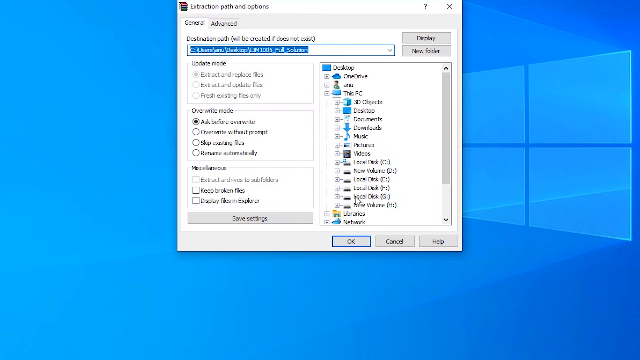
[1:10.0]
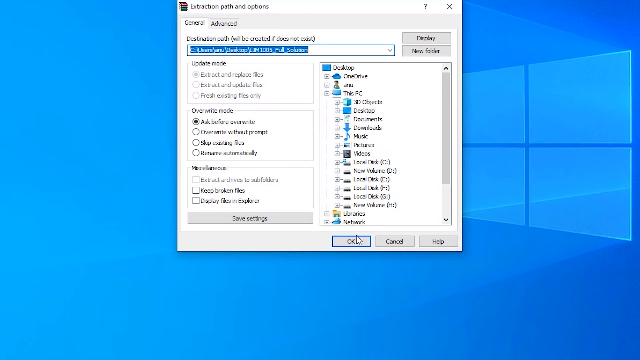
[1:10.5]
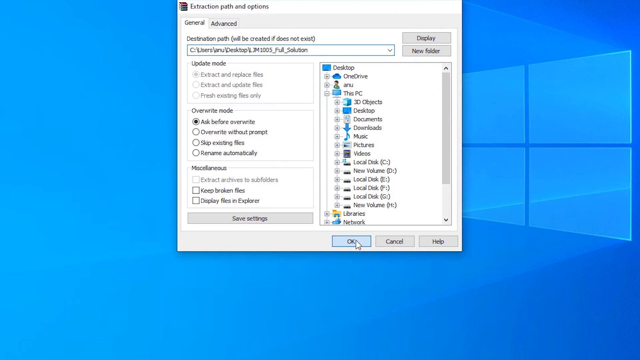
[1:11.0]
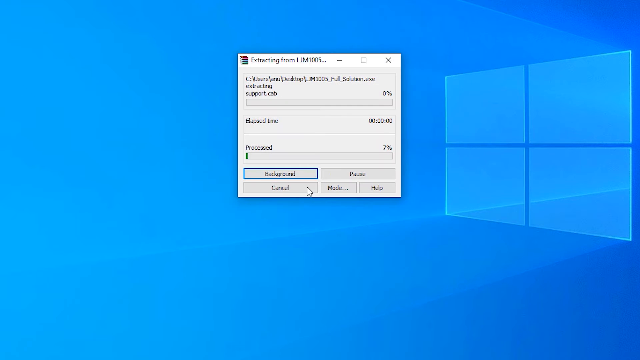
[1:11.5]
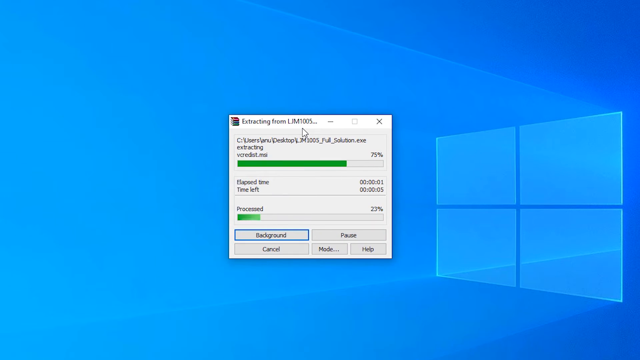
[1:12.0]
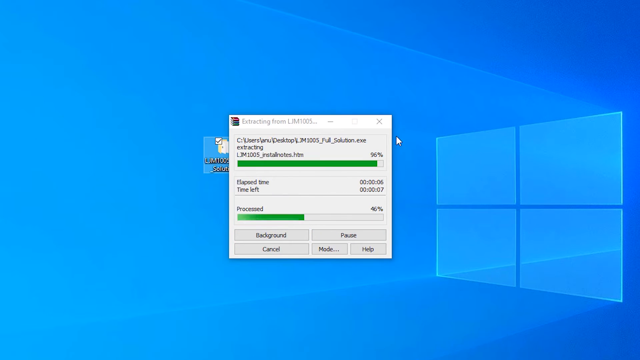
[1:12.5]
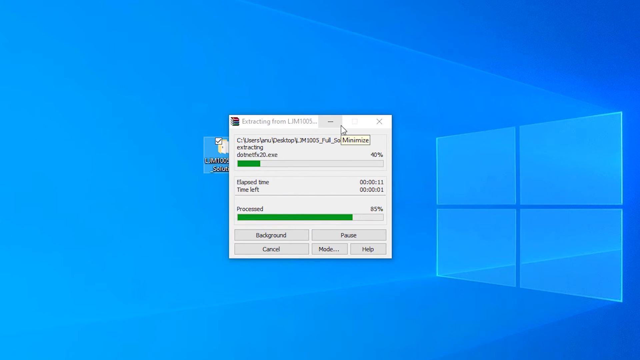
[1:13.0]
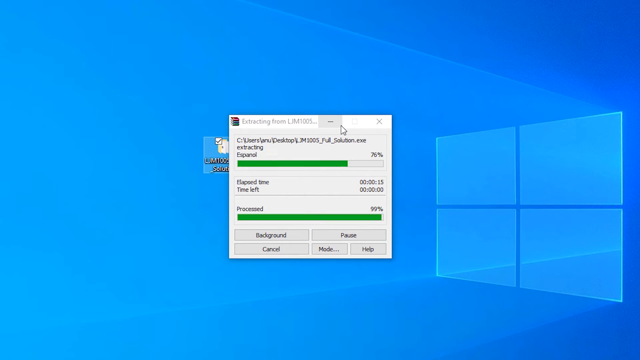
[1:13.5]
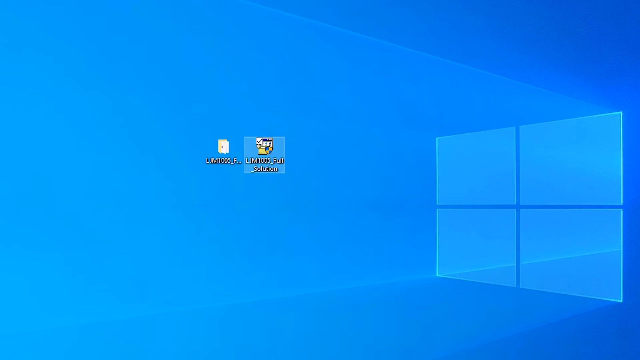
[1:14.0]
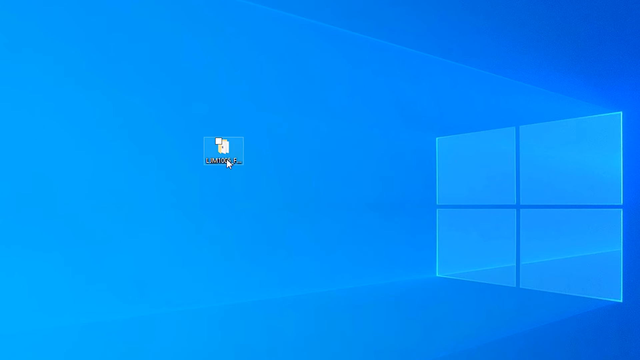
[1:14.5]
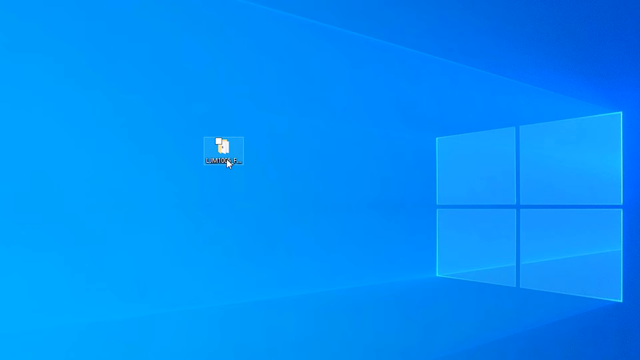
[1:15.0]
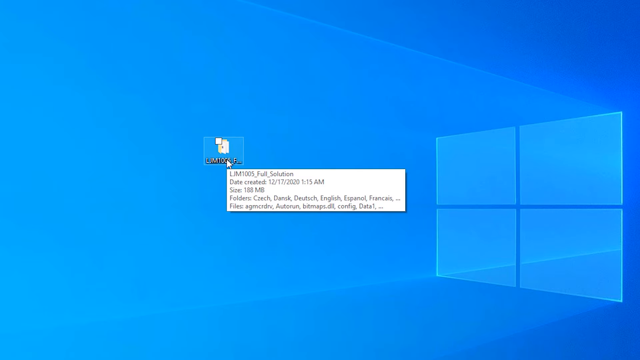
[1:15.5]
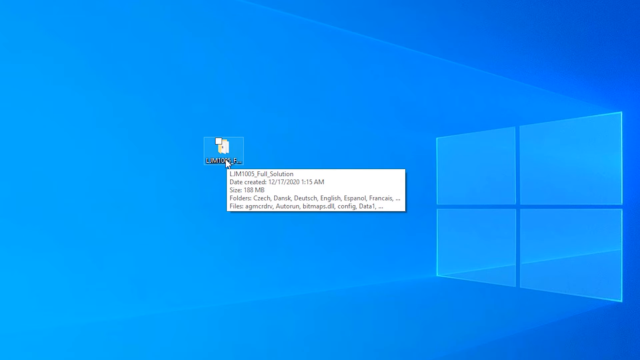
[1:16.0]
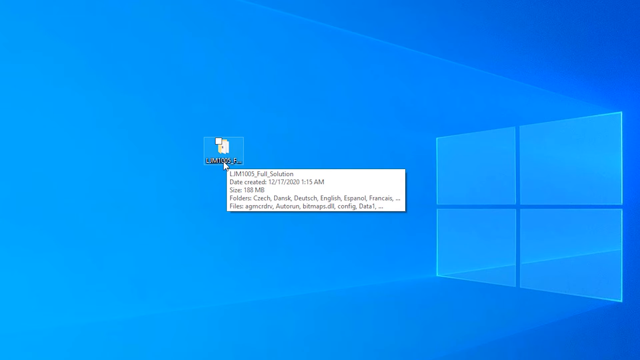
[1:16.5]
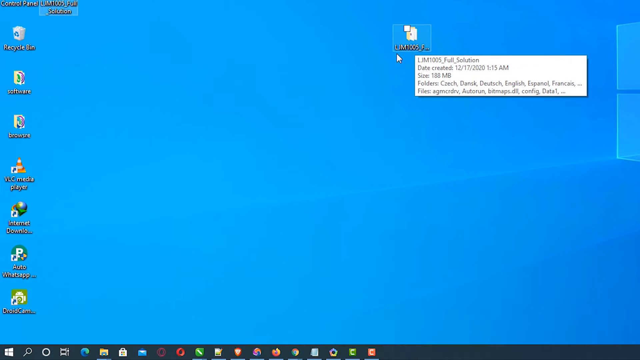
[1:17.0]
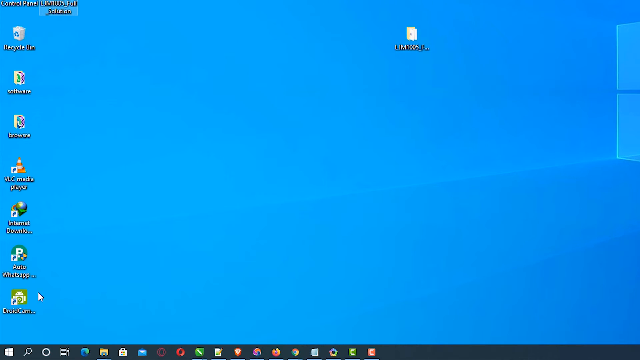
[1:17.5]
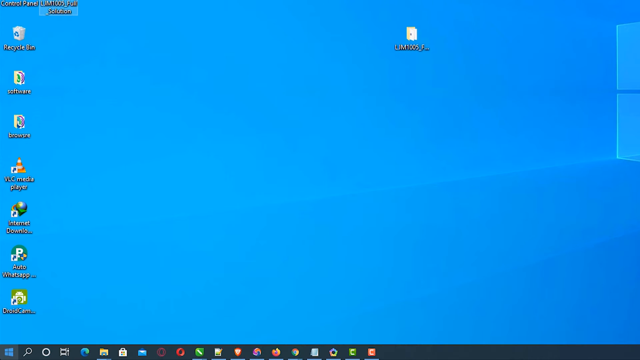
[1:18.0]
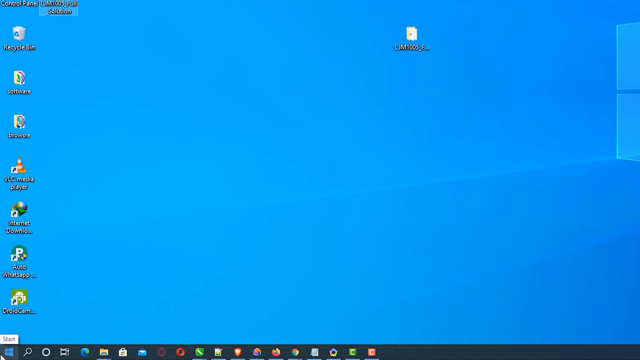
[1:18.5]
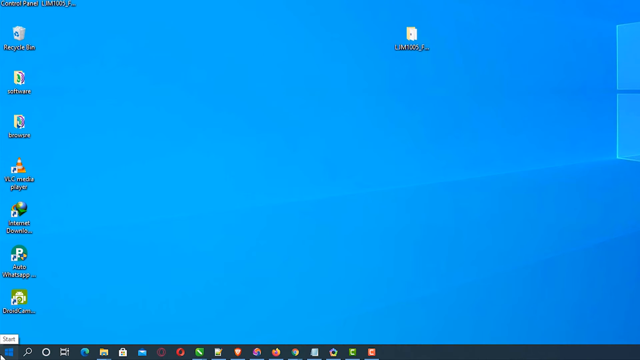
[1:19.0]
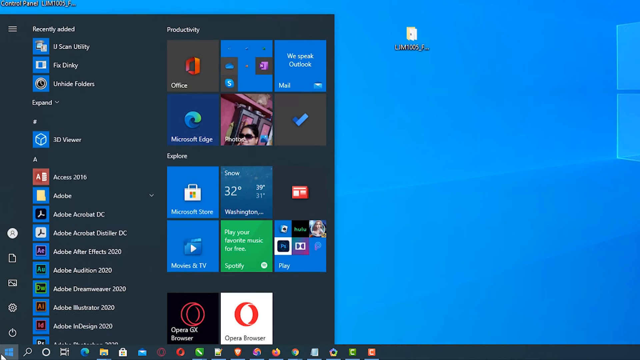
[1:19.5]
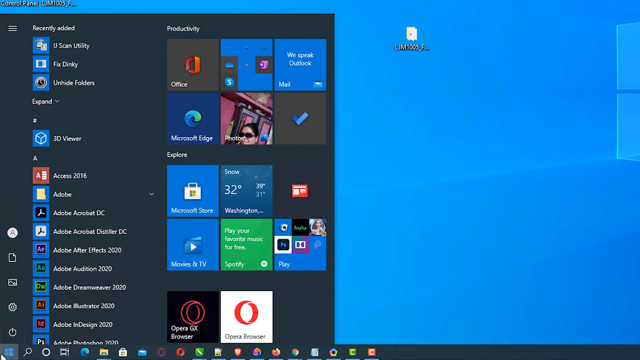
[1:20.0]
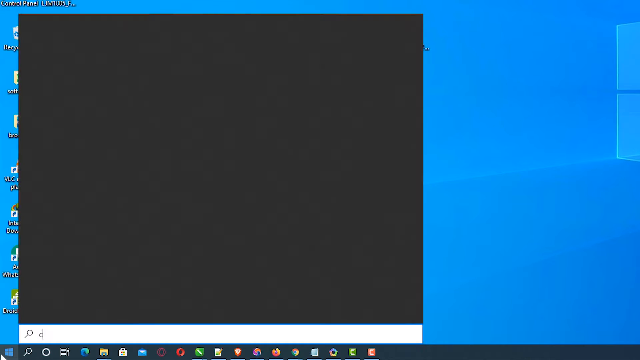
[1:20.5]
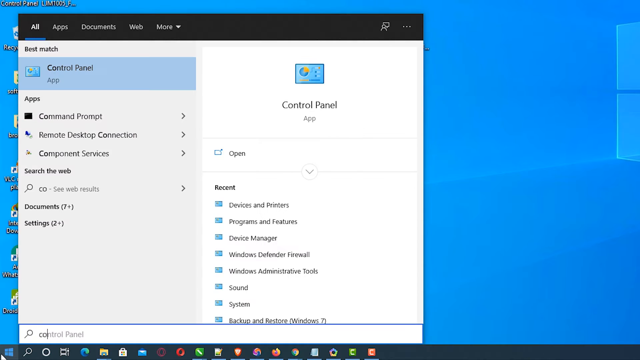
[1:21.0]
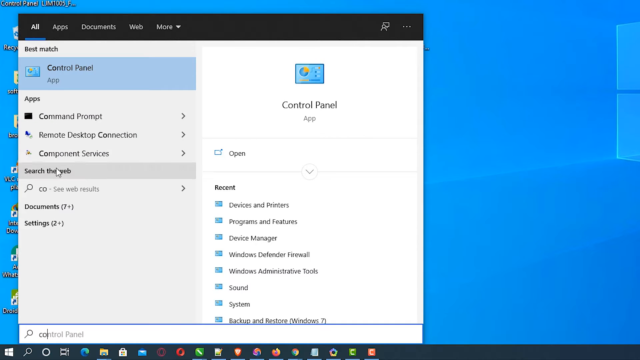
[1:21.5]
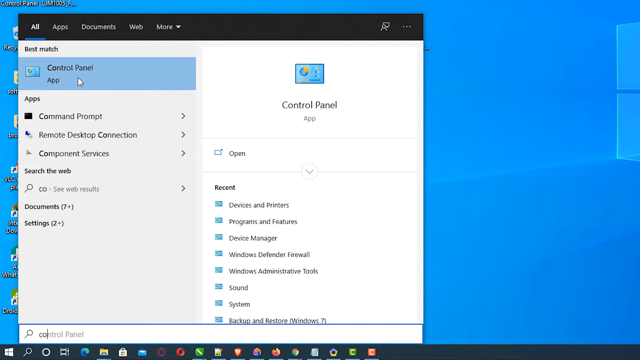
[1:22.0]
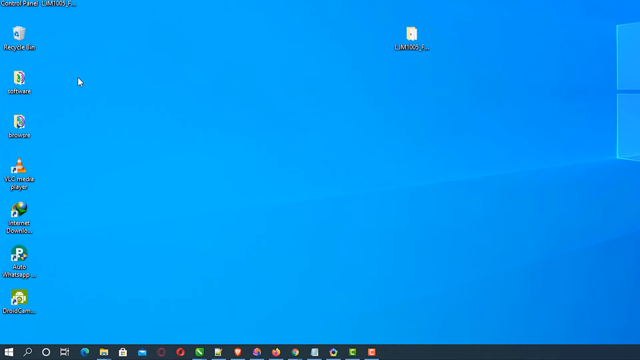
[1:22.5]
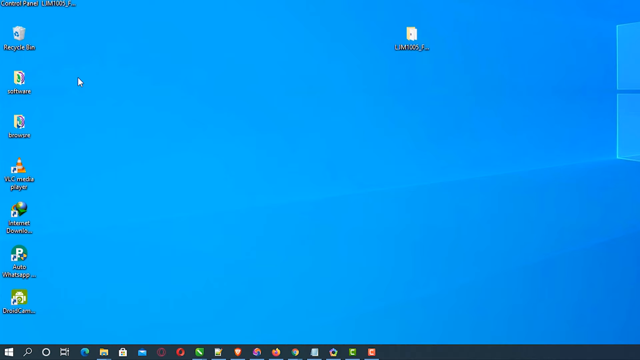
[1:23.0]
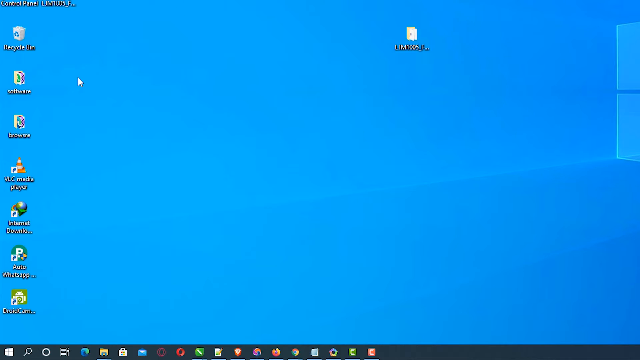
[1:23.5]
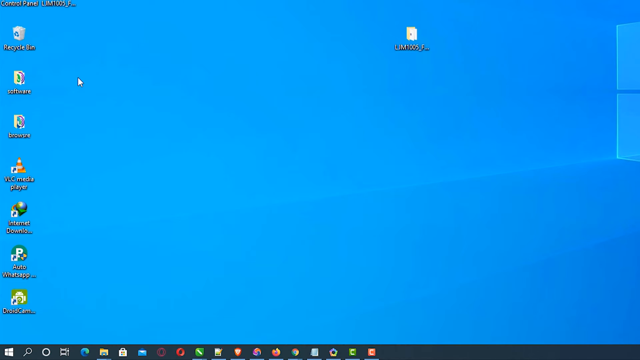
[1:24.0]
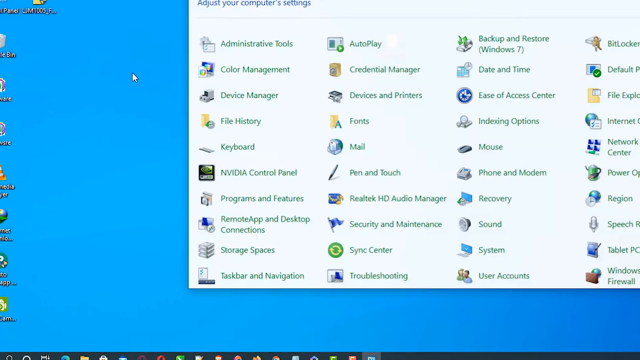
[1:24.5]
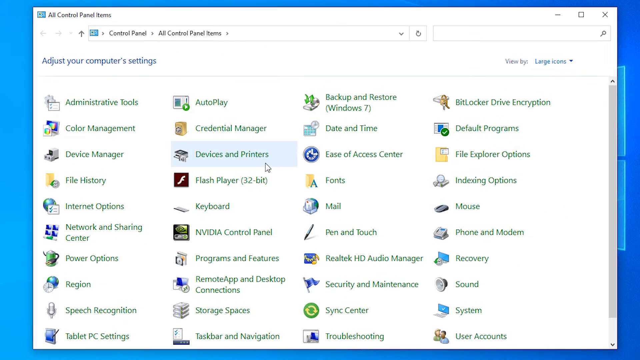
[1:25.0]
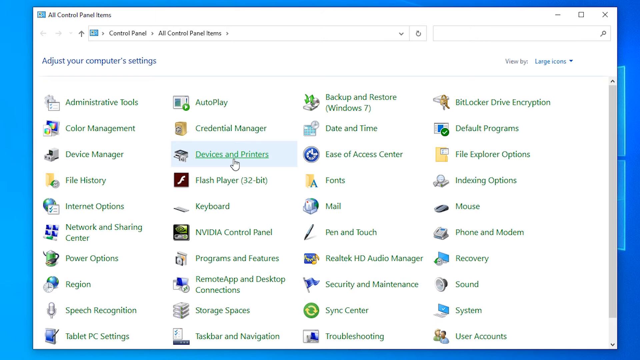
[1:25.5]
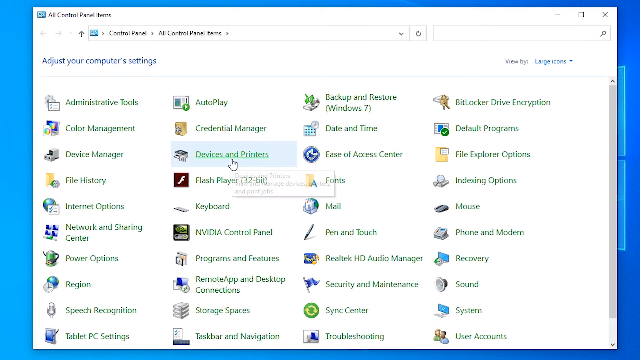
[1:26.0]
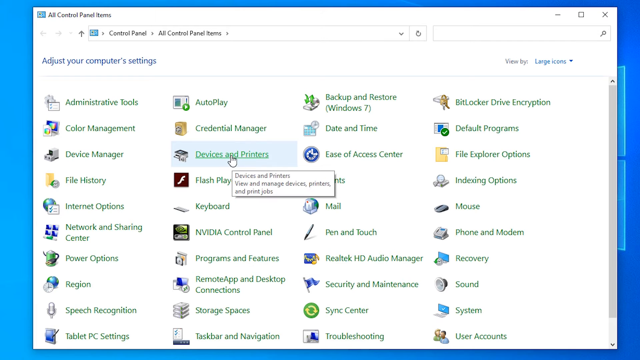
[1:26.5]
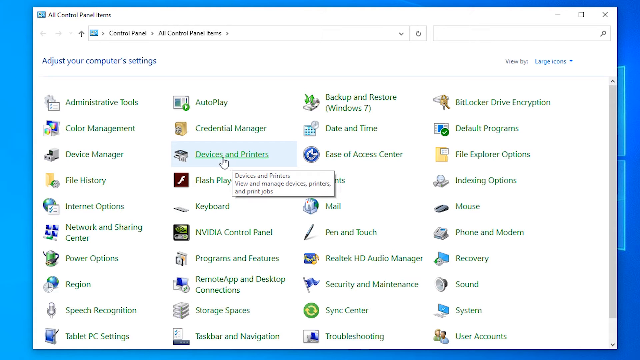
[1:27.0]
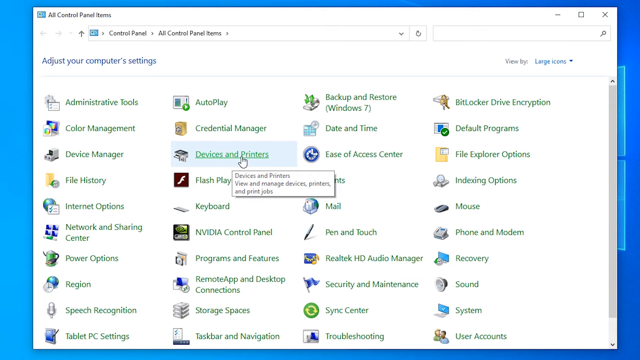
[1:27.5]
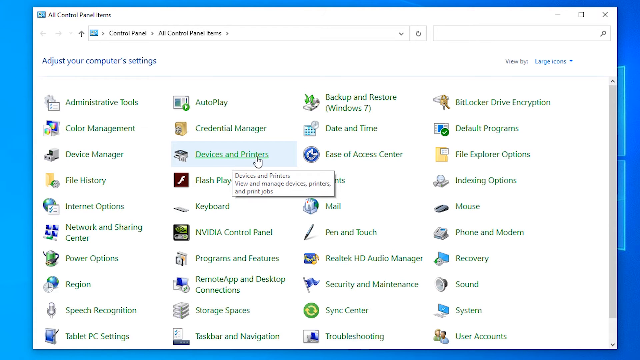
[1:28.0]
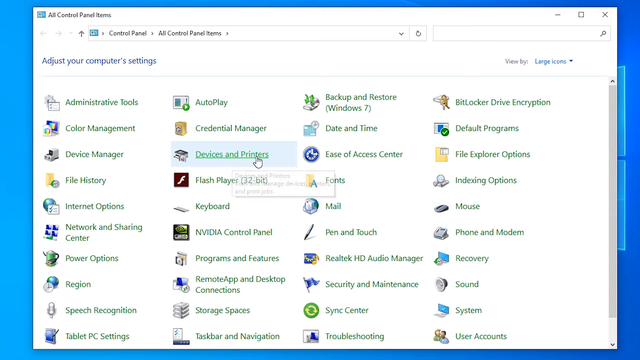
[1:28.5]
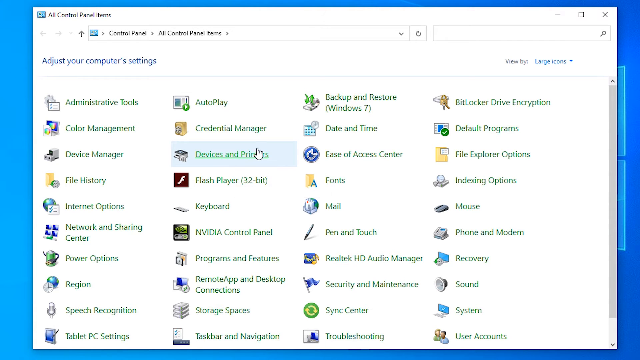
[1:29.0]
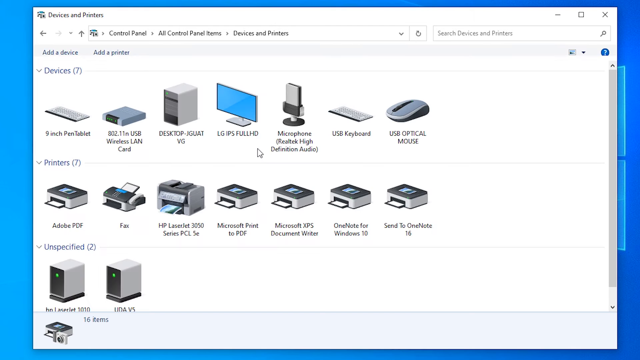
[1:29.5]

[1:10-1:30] The video, a little wider than it is tall, starts on a Windows desktop with a light blue background and an even lighter blue Windows icon on the right. A window pops up that says "extraction path and options" at the top, apparently in WinRAR. It is on the general tab with a destination to pick, and okay is clicked. Another window pops up, the WinRAR extracting window showing its progress, and it finishes within about three seconds. The result is then on the desktop in the center, and the cursor arrows over it. Windows is then opened and the control panel is chosen, which takes a second to open. Next the cursor goes to devices and printers, wiggles over it, and clicks it.